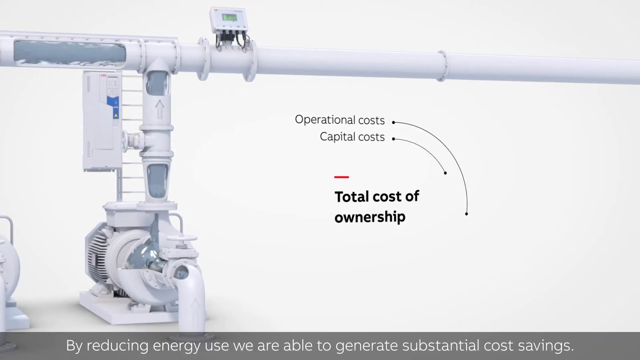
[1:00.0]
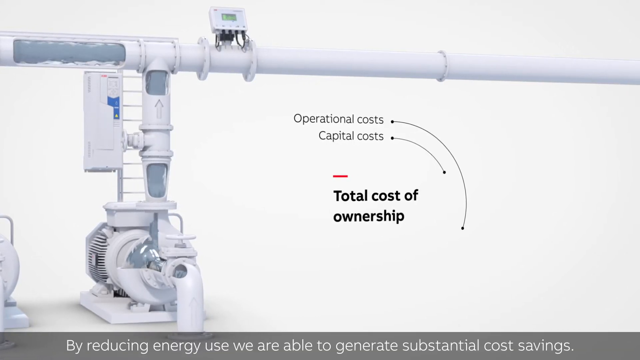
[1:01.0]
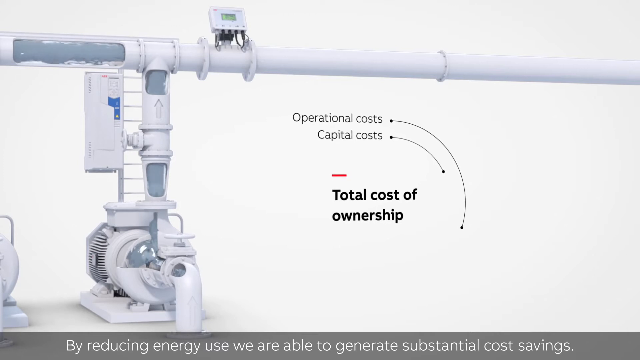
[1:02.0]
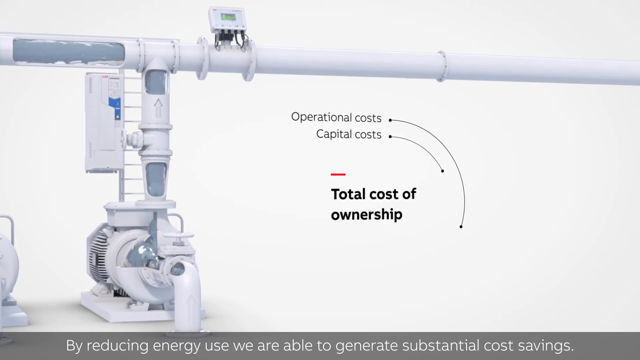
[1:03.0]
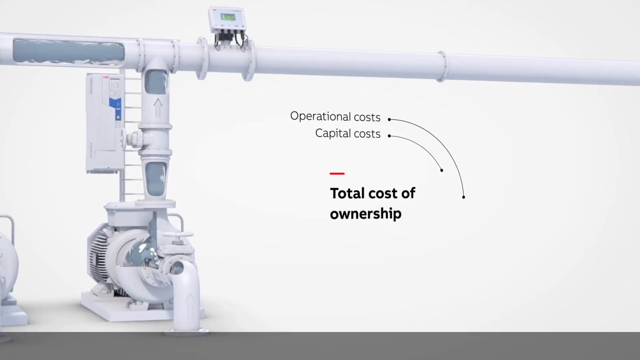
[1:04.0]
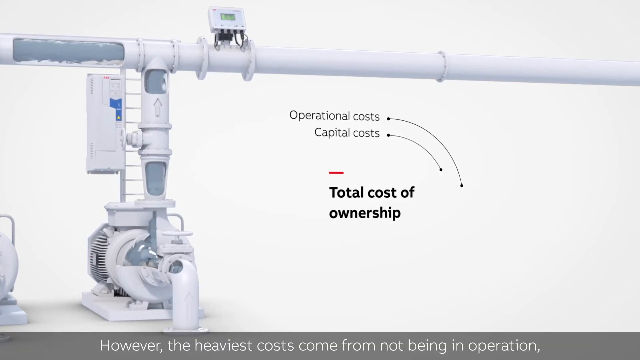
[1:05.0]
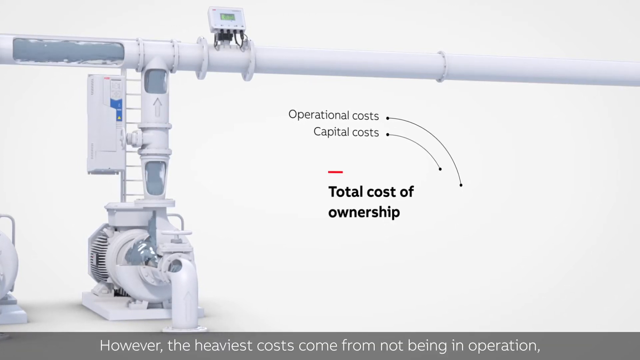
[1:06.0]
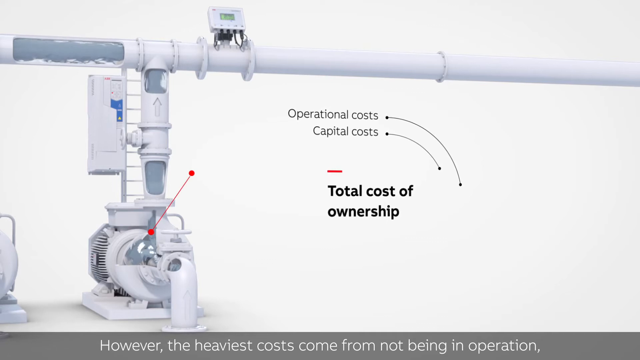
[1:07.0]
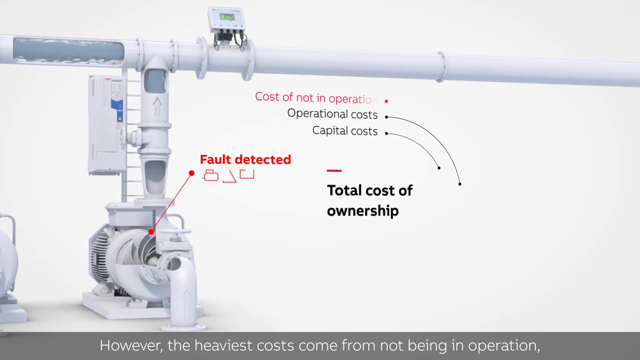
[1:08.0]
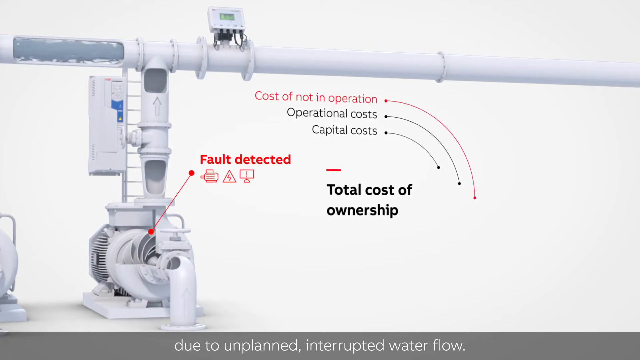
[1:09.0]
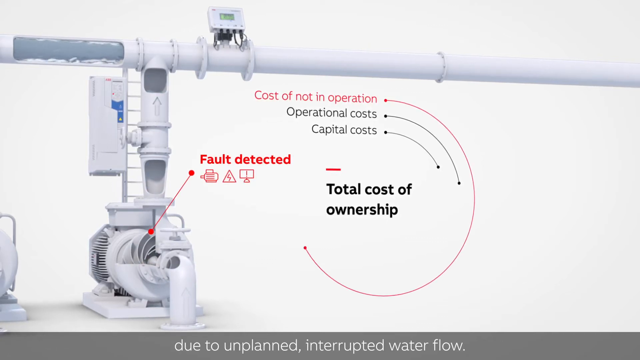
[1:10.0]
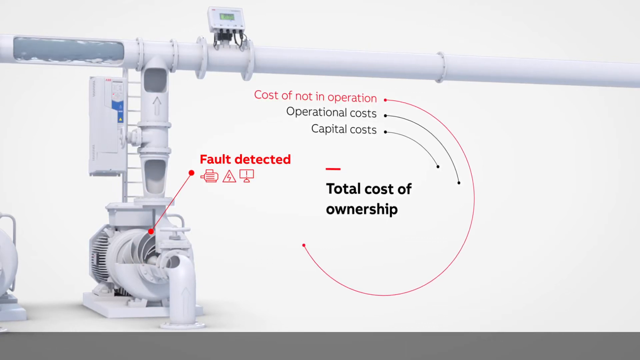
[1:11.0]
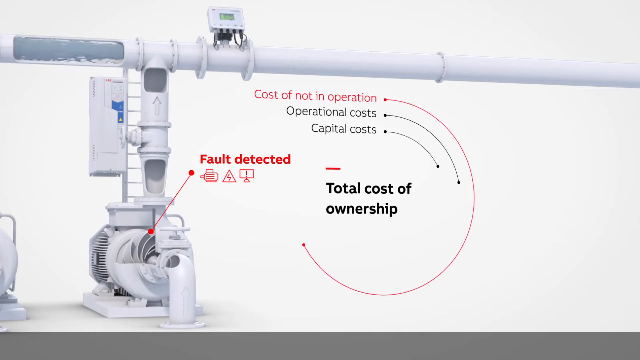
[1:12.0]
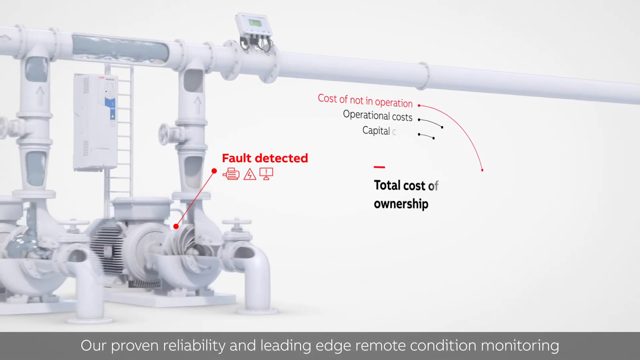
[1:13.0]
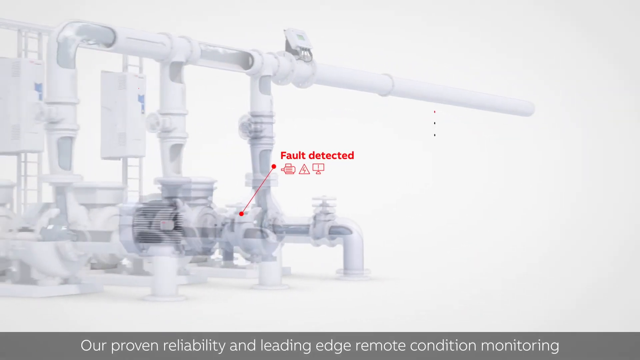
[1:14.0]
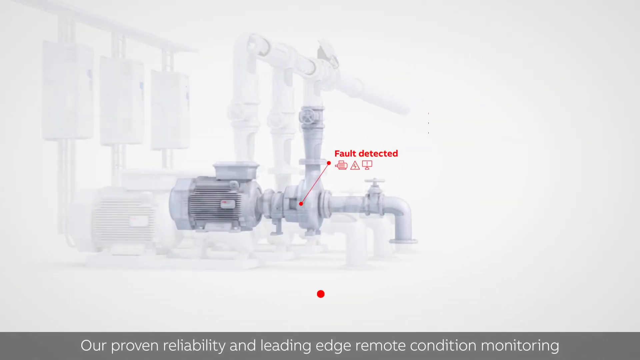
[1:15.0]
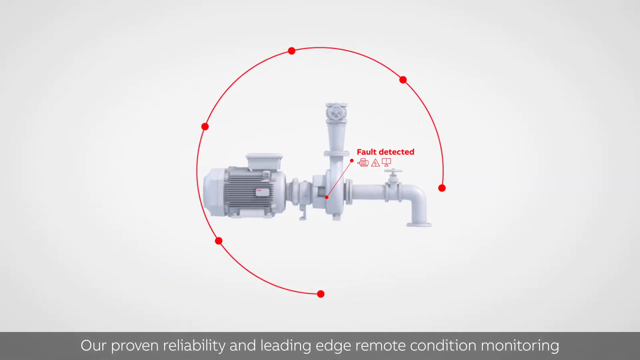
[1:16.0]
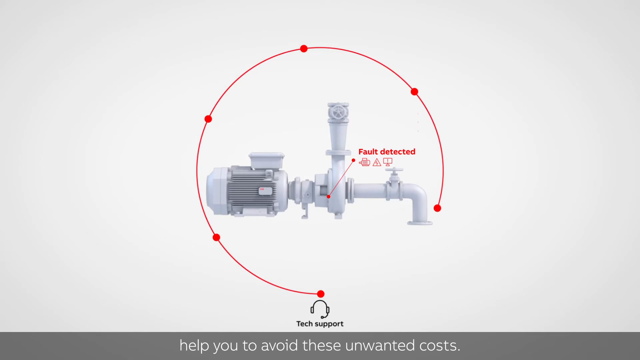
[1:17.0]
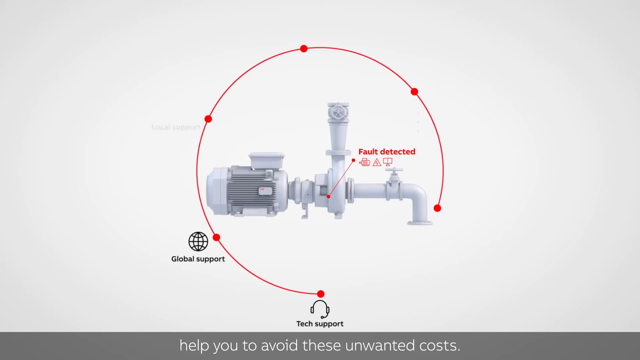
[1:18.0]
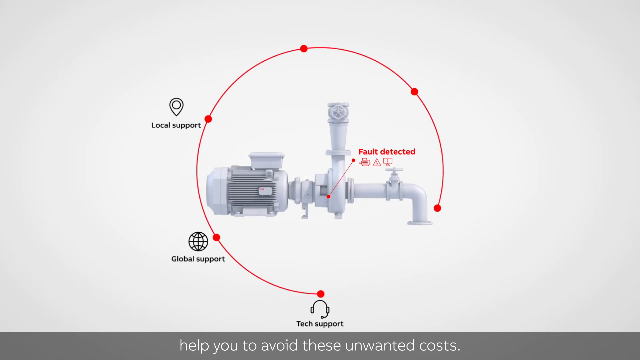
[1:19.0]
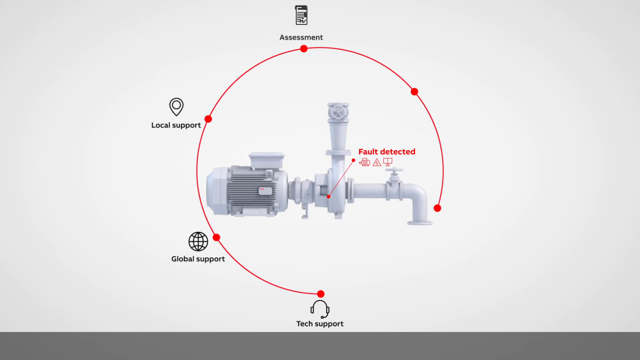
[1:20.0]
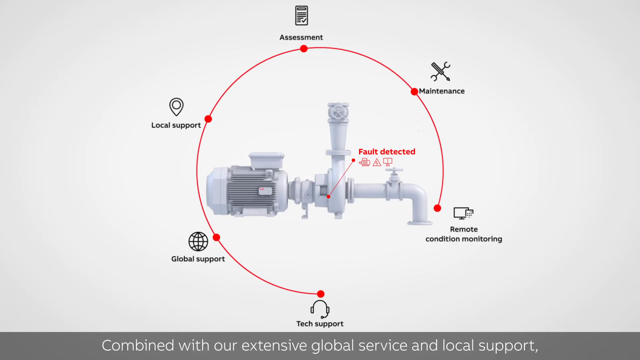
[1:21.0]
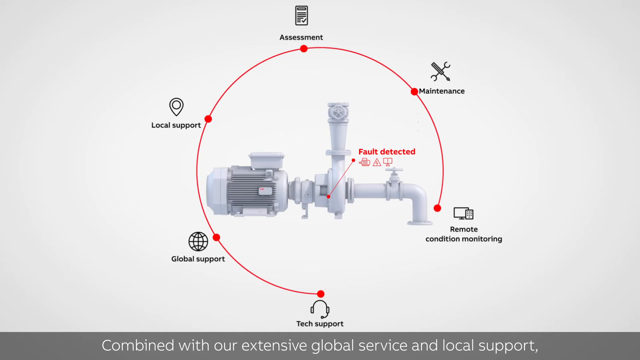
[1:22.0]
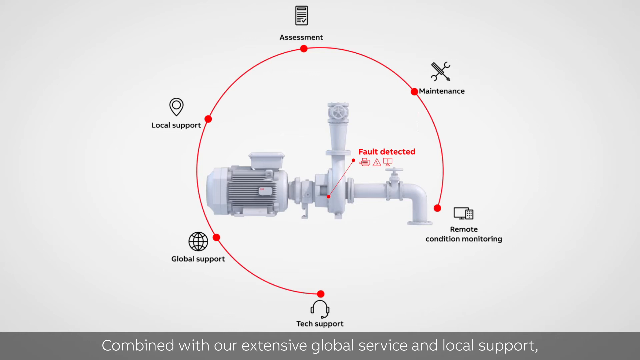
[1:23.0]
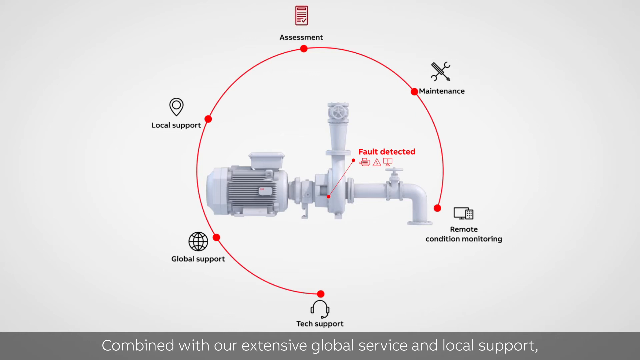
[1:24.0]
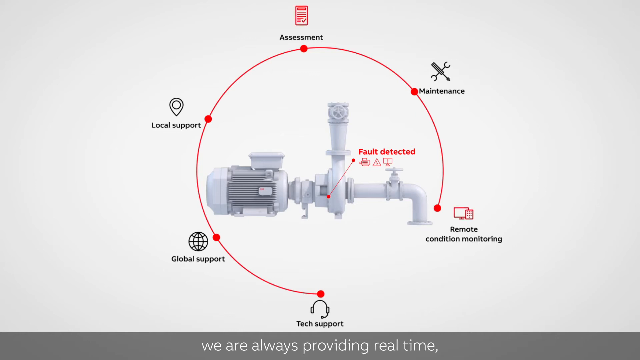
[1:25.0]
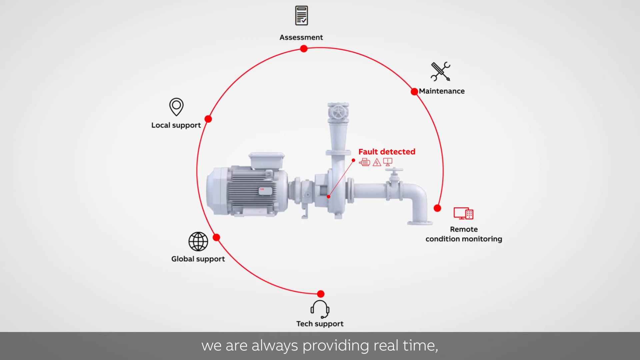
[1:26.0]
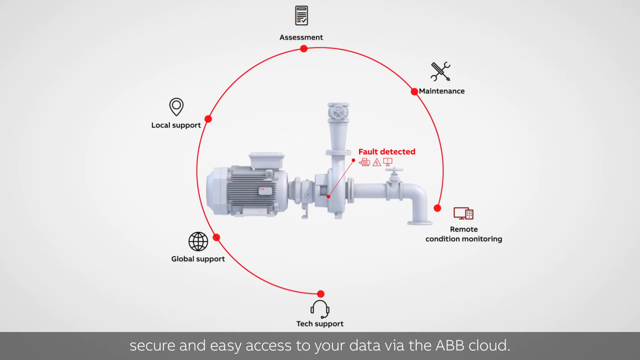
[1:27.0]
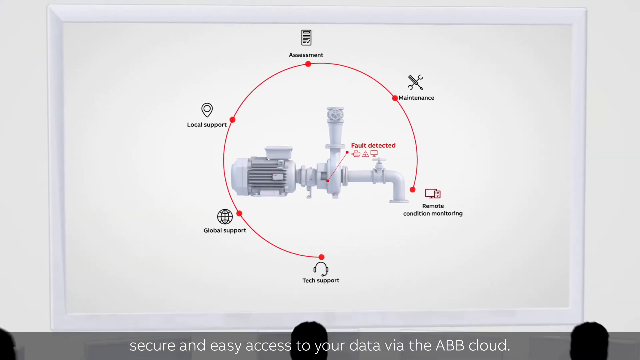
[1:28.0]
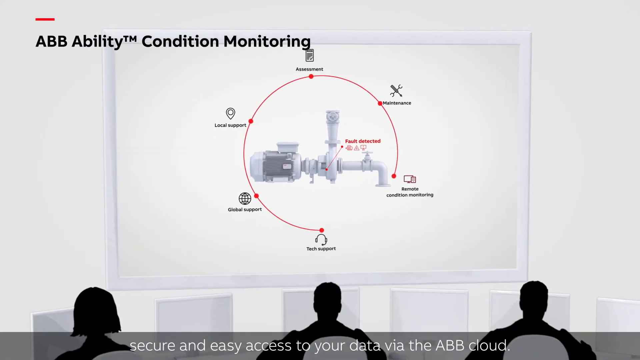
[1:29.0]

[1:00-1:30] A lot of buildings that need water supplied to them are shown. Three pumps are shown, from which water is supplied to the town, to buildings, offices and houses. It looks like one pump is leaking and causing damage. Total cost of ownership, operational costs and capital are shown. That pump is the one that supplies water into the town.